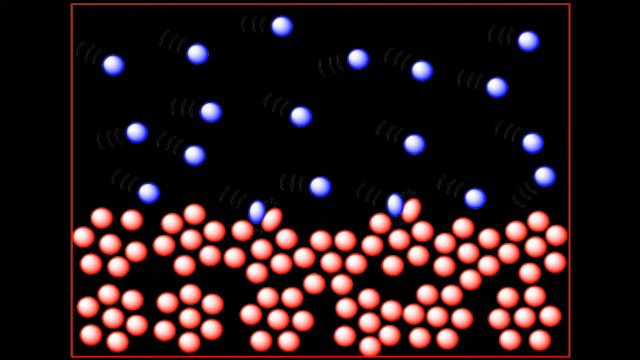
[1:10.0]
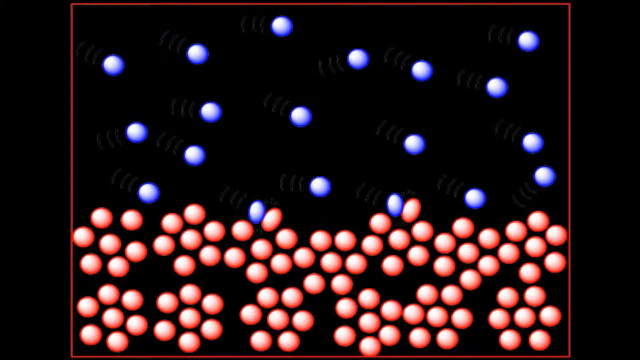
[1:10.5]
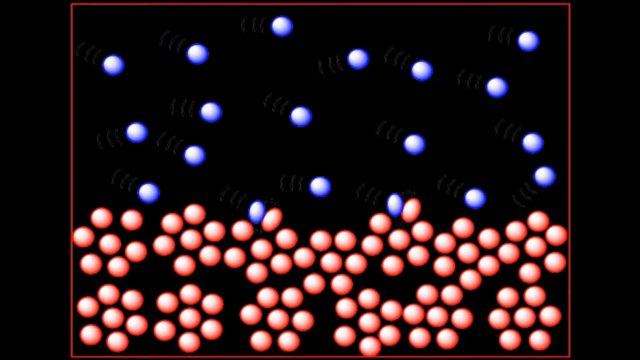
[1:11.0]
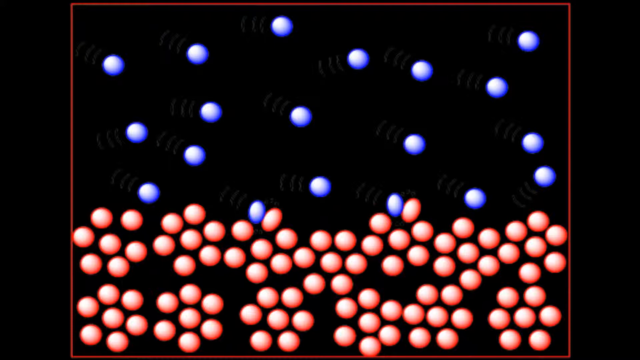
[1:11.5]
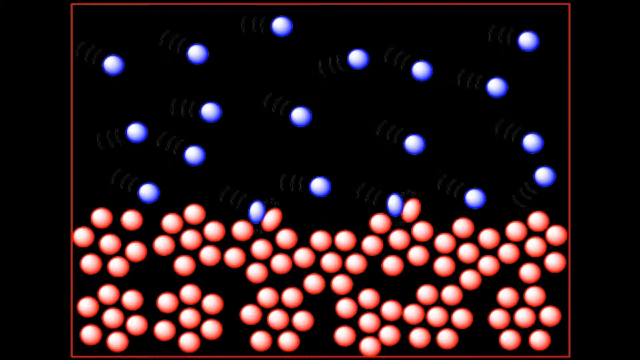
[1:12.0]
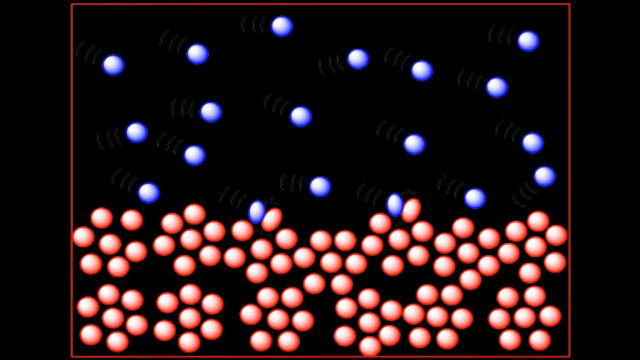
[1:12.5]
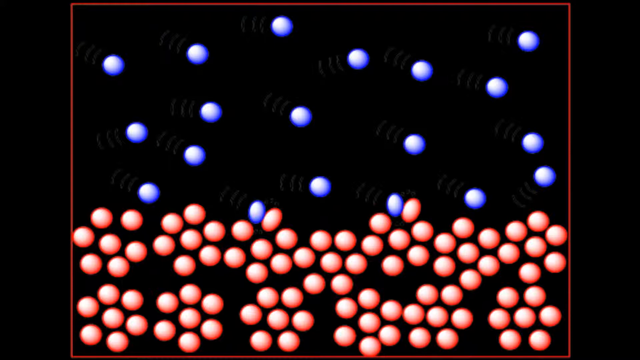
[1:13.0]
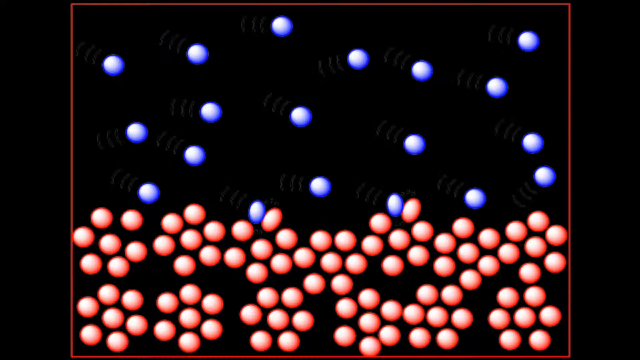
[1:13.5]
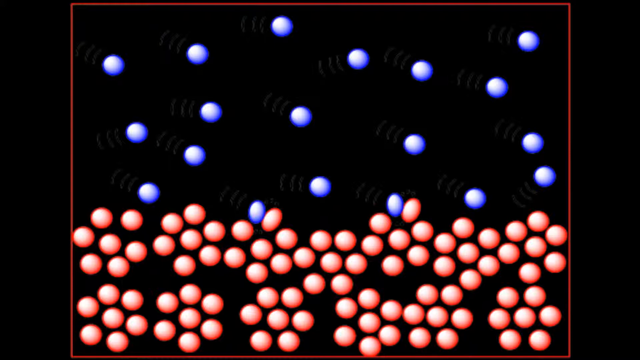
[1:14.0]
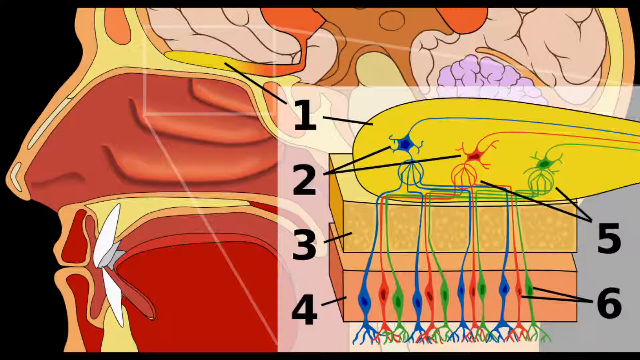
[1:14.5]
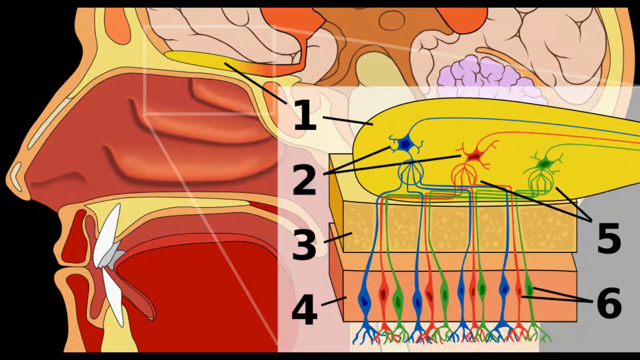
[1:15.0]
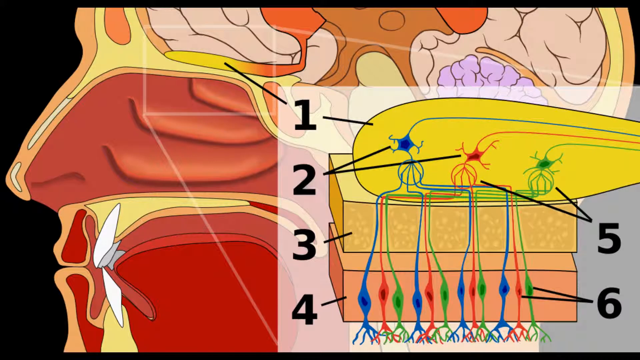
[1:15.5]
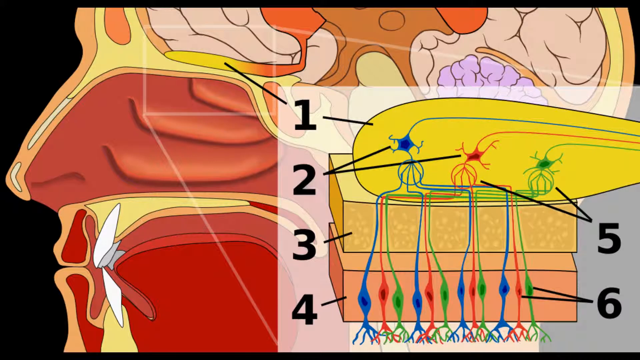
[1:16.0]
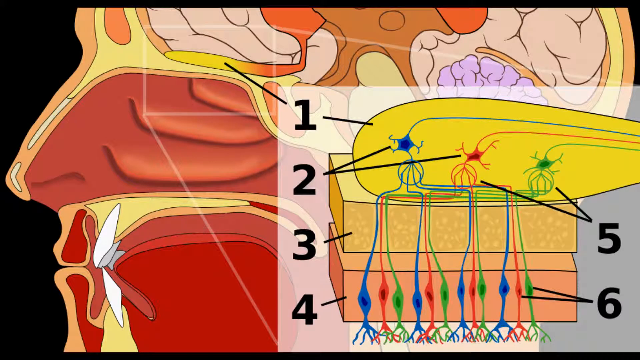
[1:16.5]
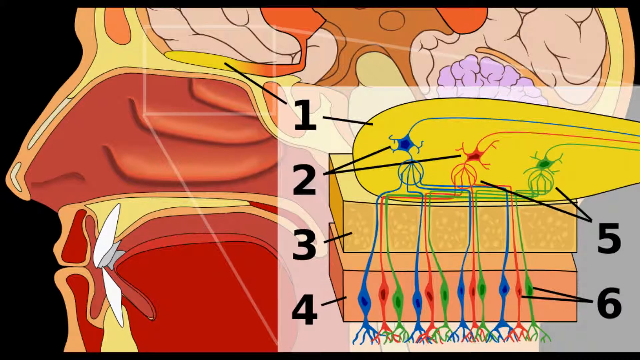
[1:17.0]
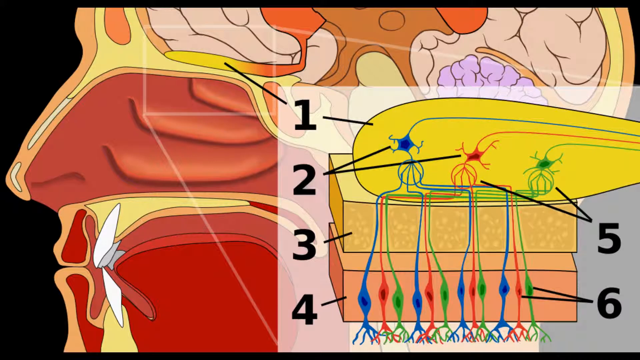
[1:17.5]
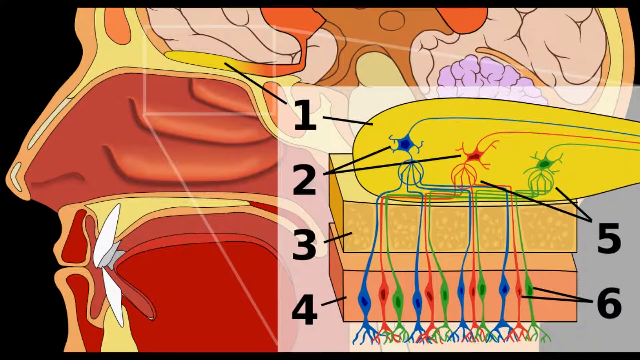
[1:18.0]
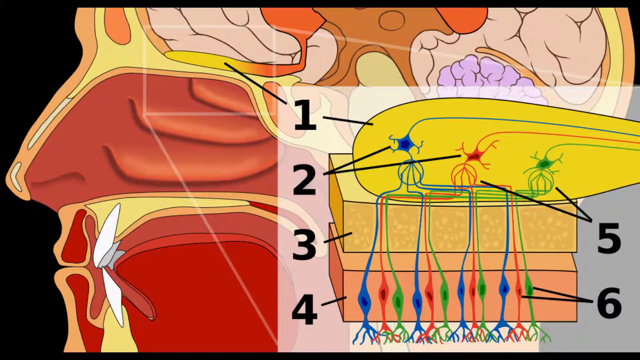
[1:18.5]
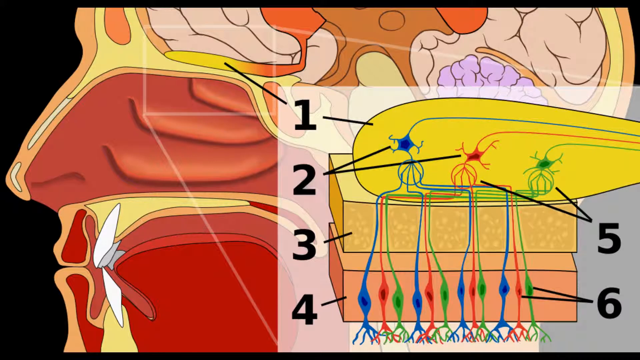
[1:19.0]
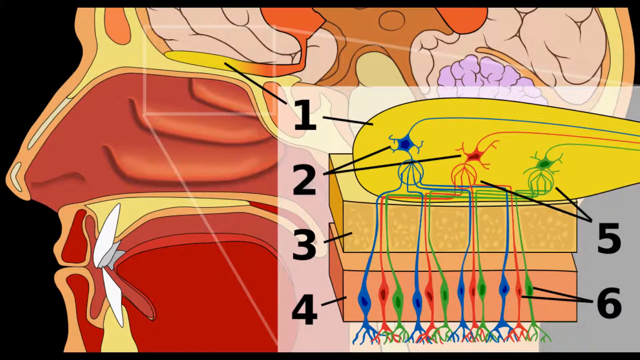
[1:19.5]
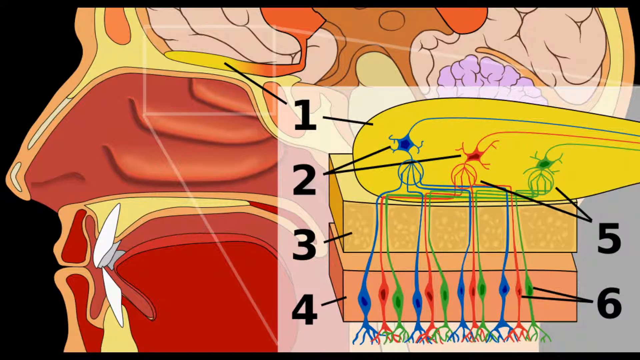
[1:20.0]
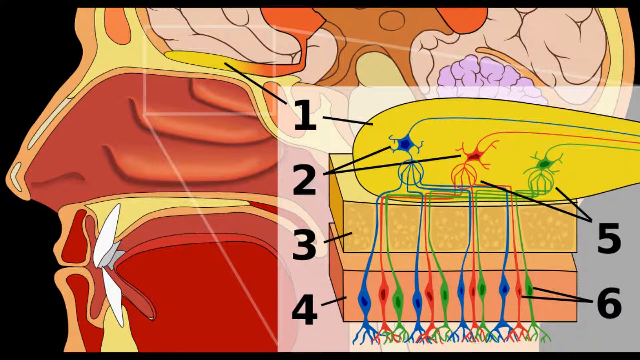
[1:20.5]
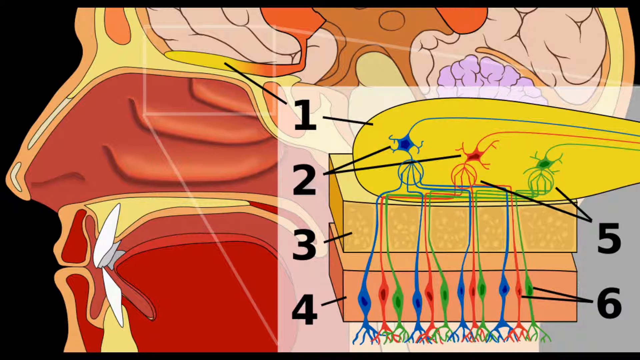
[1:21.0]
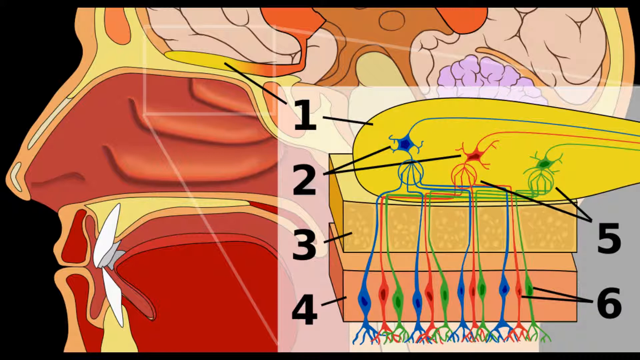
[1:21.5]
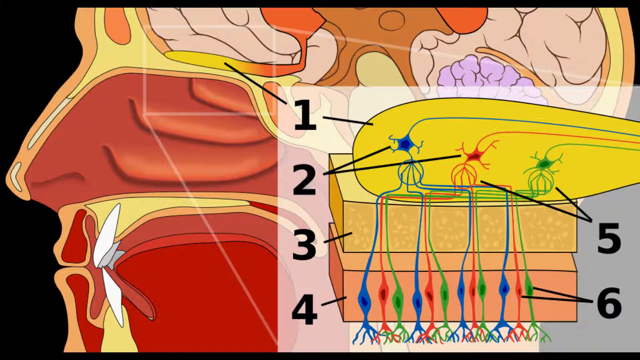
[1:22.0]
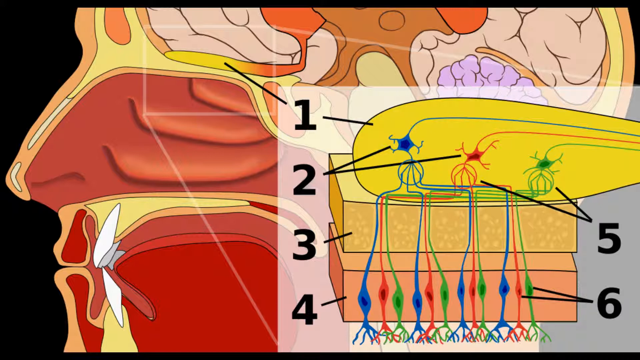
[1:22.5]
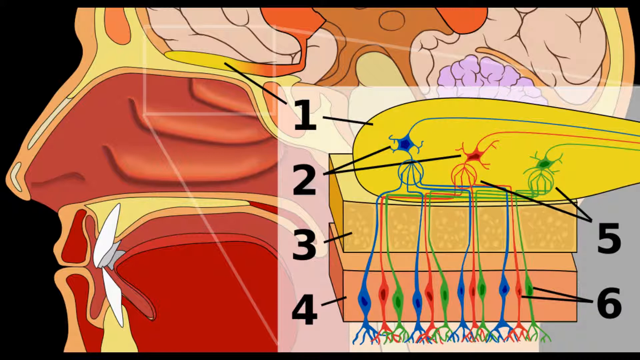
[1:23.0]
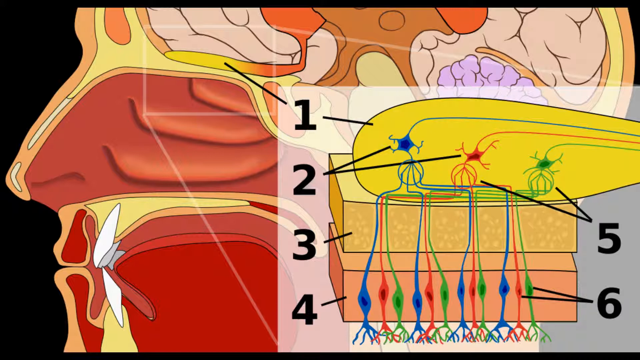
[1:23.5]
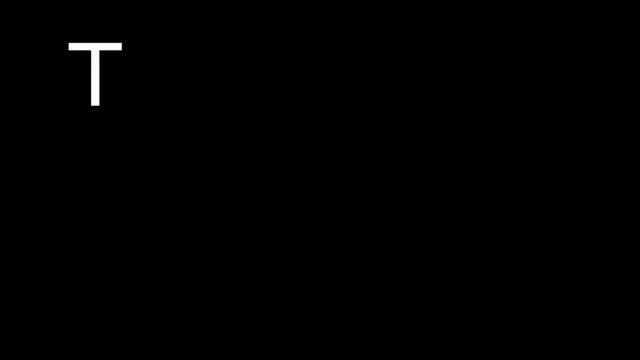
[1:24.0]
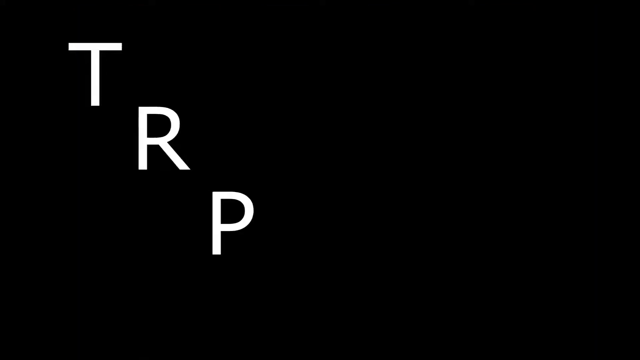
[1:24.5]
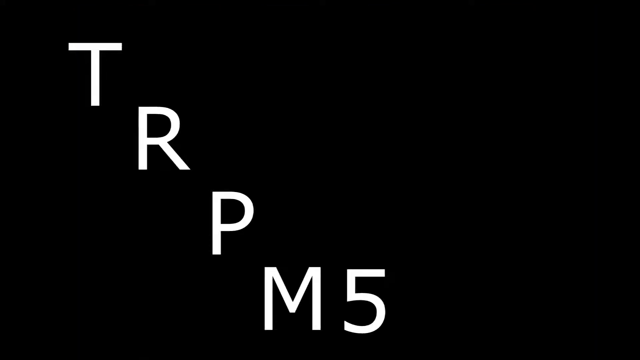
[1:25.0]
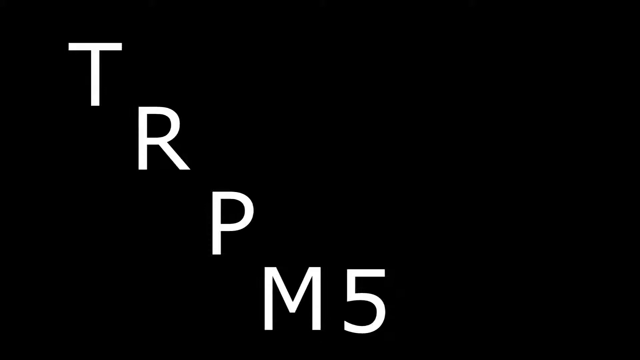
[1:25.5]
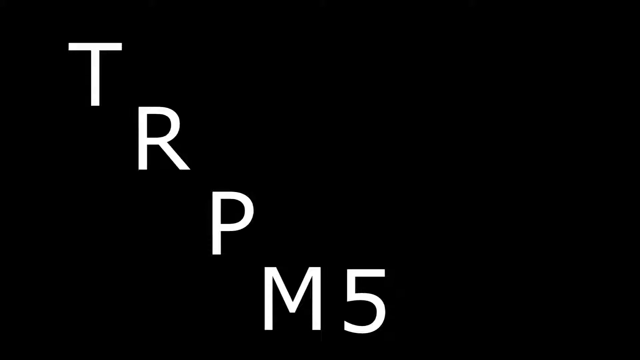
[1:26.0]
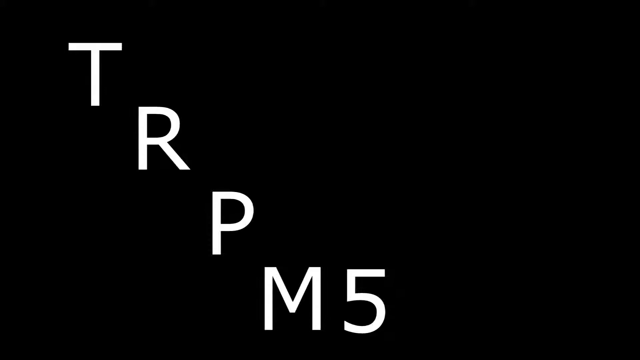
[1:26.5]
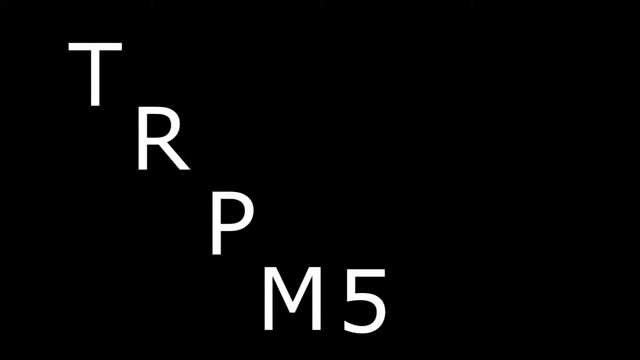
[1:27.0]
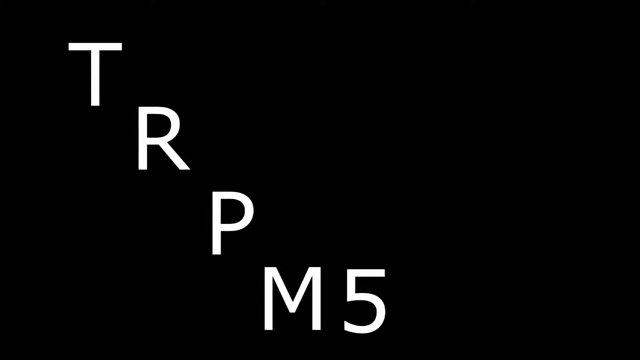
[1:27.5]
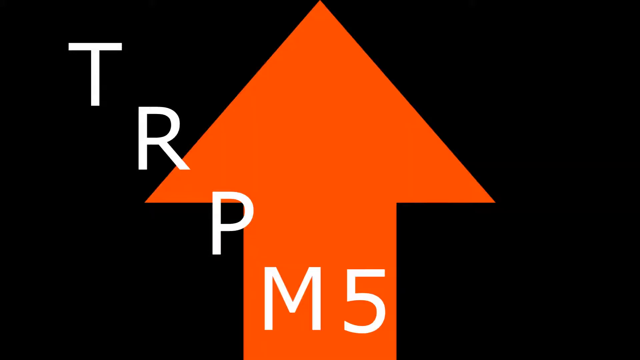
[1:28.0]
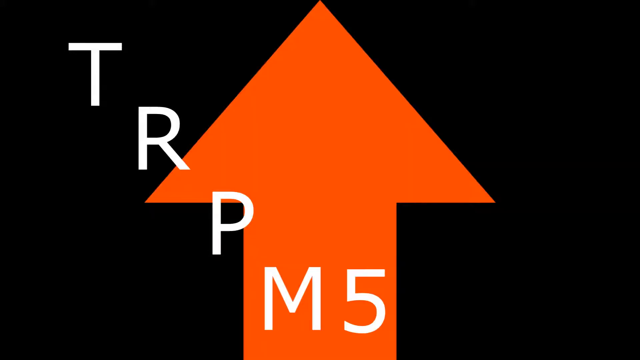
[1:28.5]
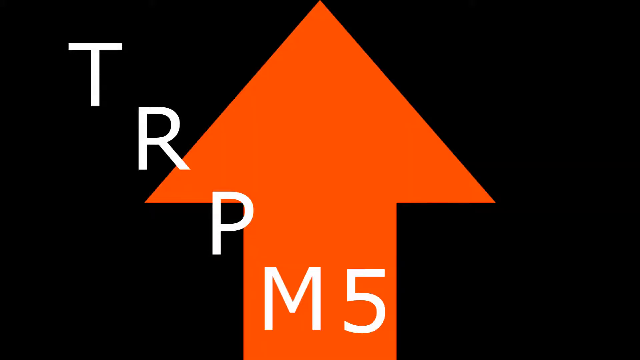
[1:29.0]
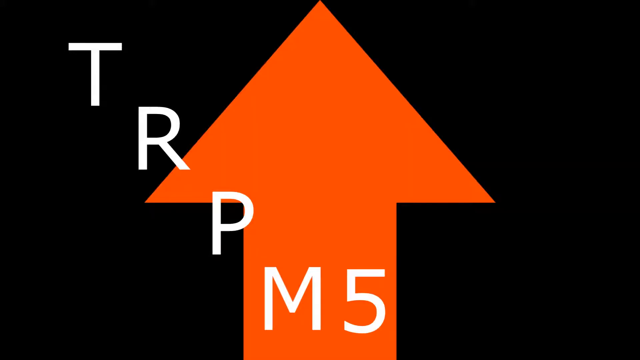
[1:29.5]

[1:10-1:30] Food particles apparently touch the taste bud receptors in a diagram, looking like they are raining down. The inside of the human brain appears next, with nerve receptors in the brain diagrammed into six parts; nothing is labeled, there are just numbers. The nasal cavity also apparently has something to do with it. A caption then reads "TRPM5" with a red arrow pointing up.